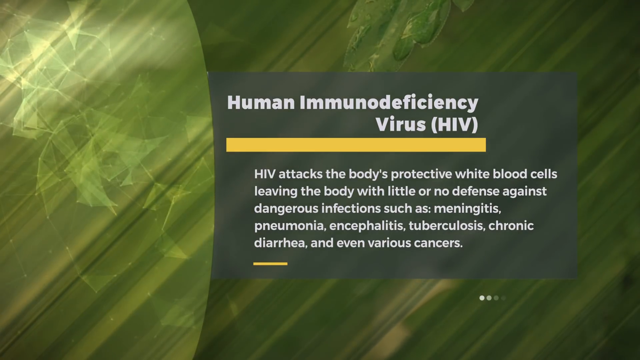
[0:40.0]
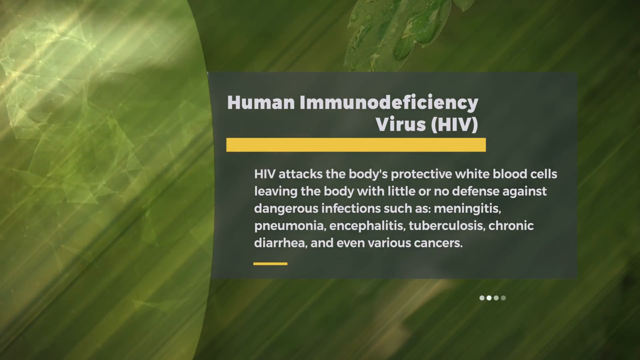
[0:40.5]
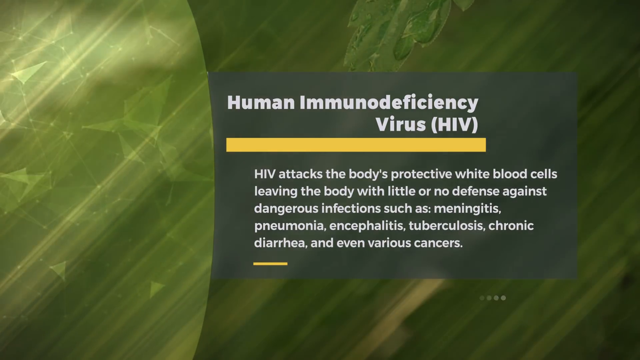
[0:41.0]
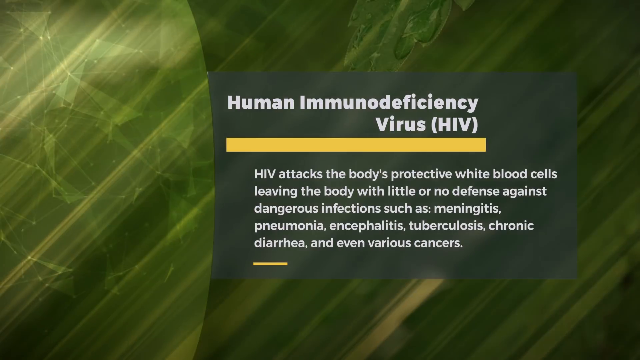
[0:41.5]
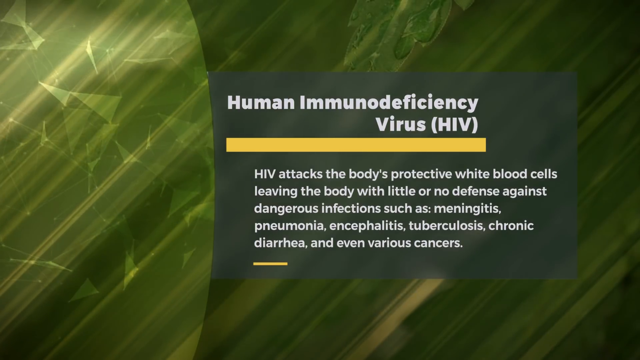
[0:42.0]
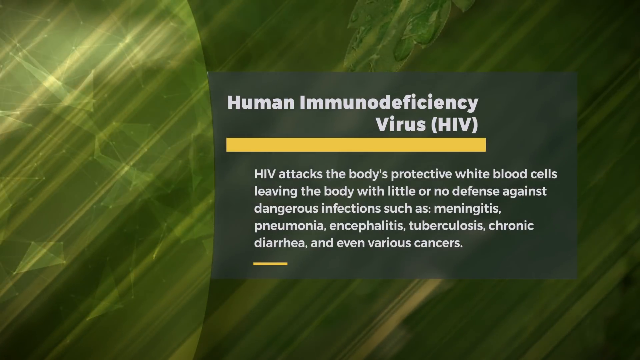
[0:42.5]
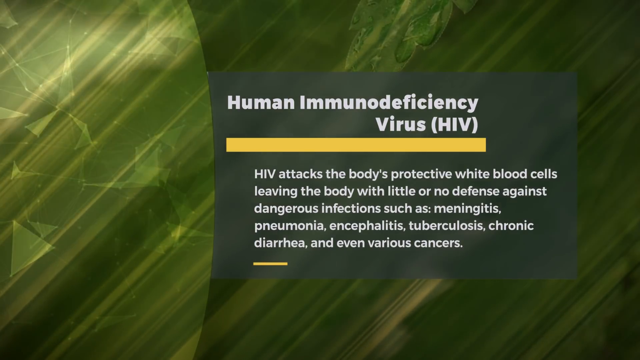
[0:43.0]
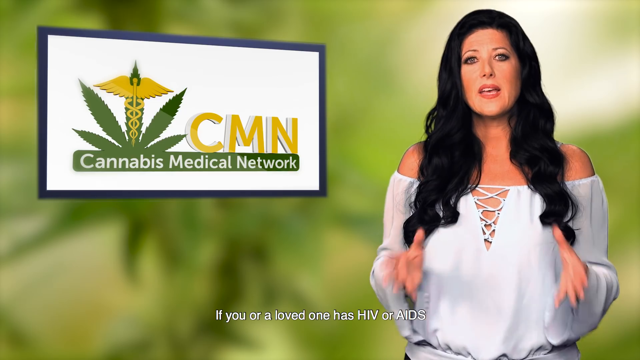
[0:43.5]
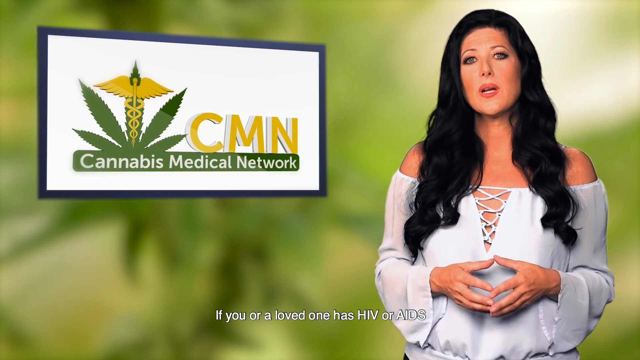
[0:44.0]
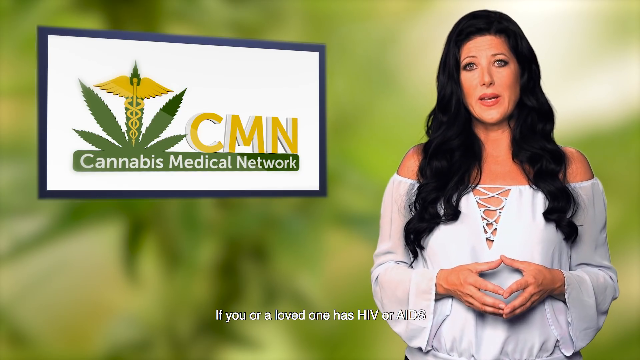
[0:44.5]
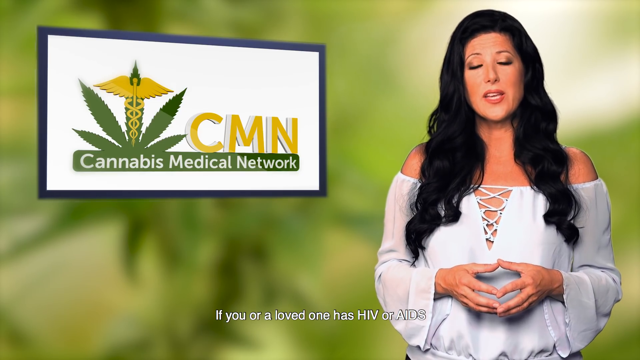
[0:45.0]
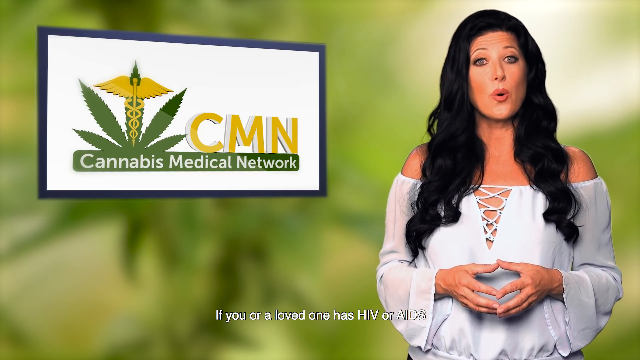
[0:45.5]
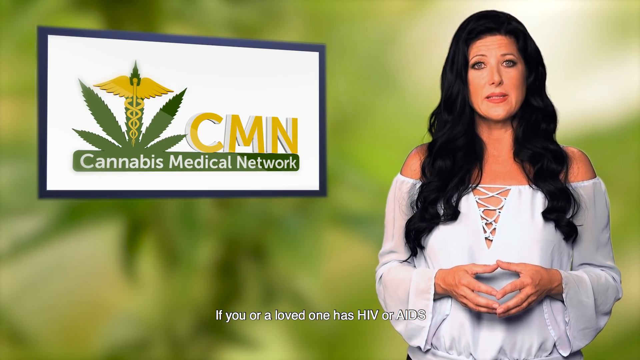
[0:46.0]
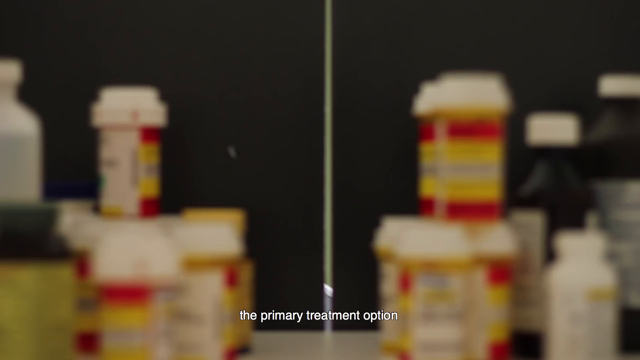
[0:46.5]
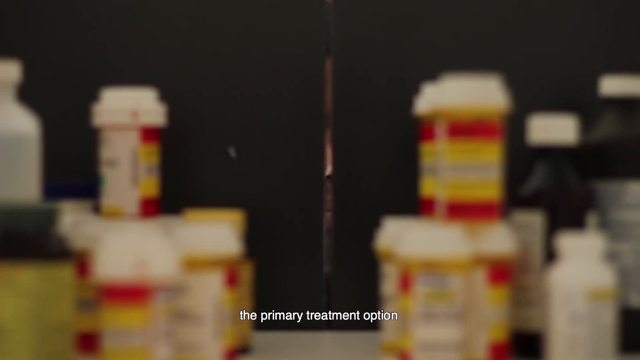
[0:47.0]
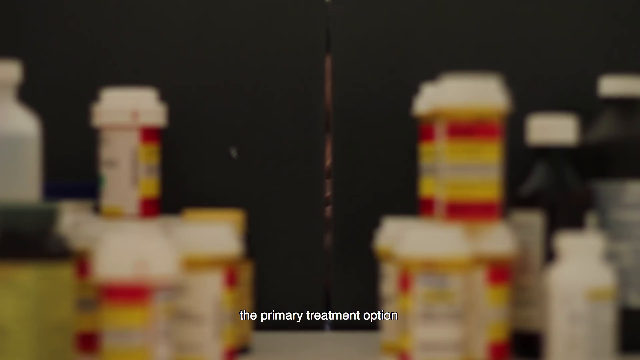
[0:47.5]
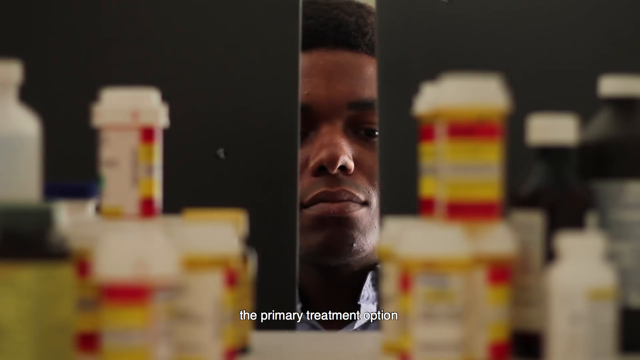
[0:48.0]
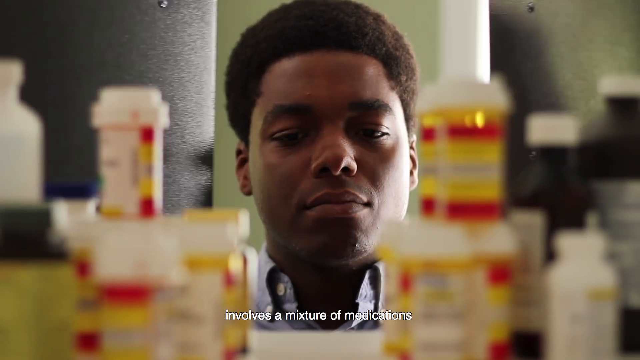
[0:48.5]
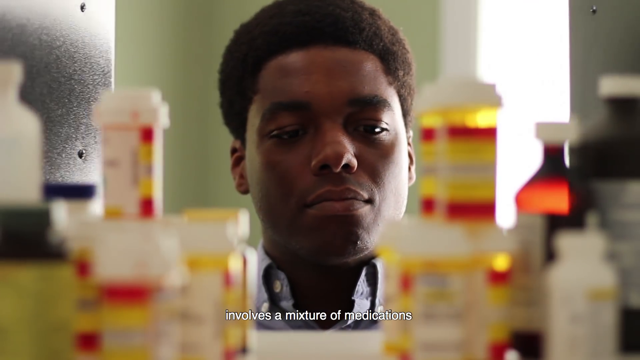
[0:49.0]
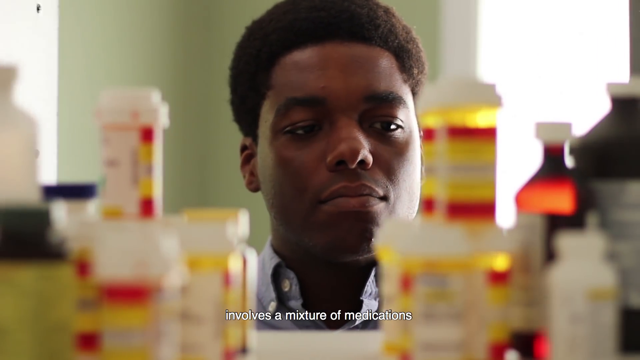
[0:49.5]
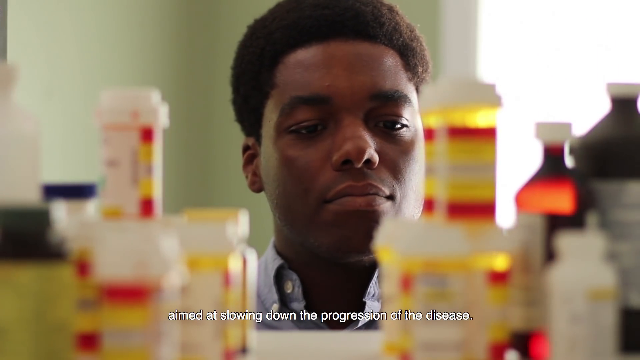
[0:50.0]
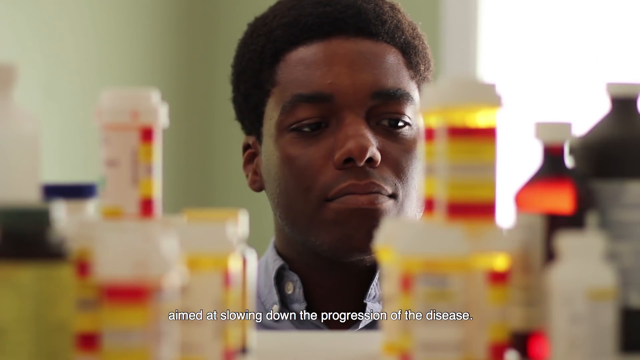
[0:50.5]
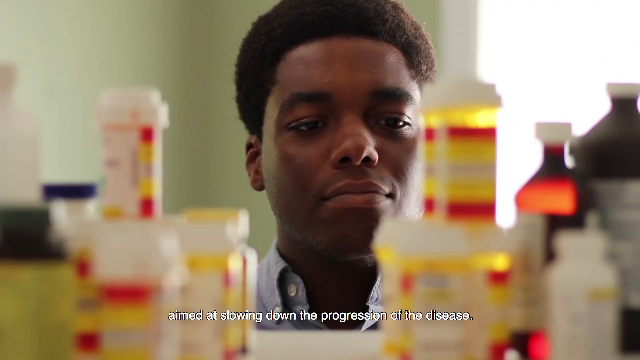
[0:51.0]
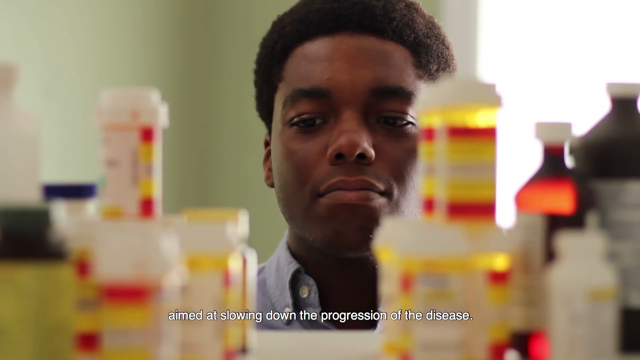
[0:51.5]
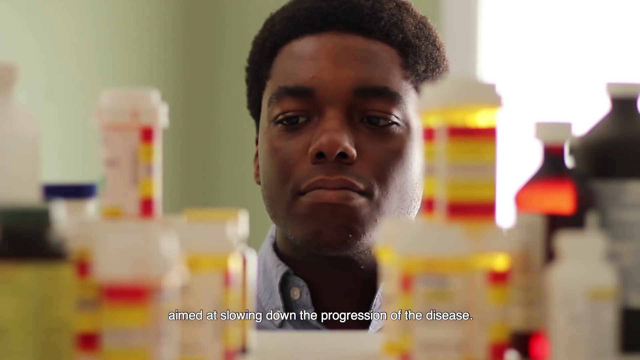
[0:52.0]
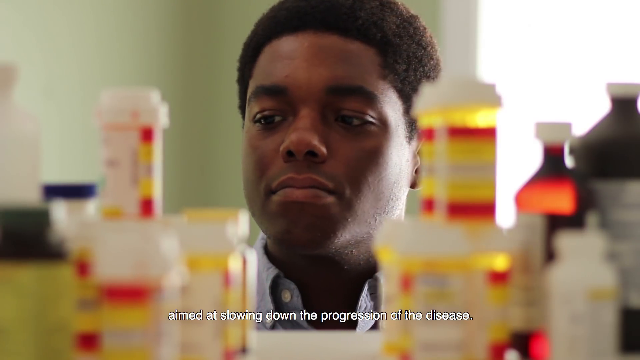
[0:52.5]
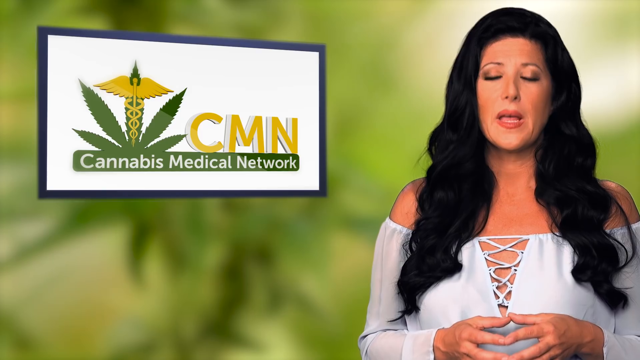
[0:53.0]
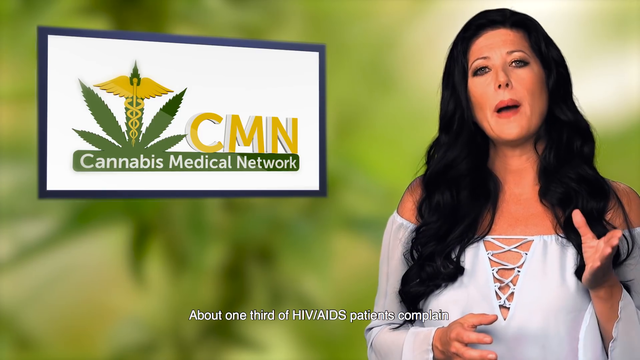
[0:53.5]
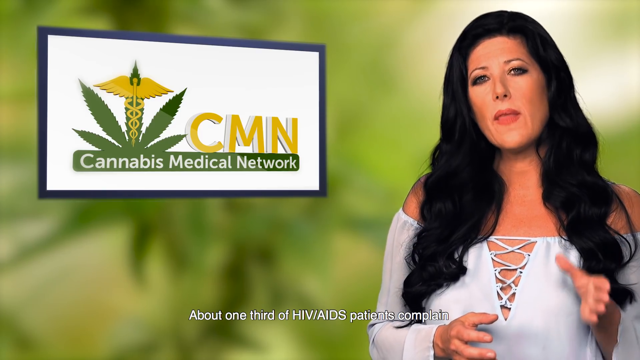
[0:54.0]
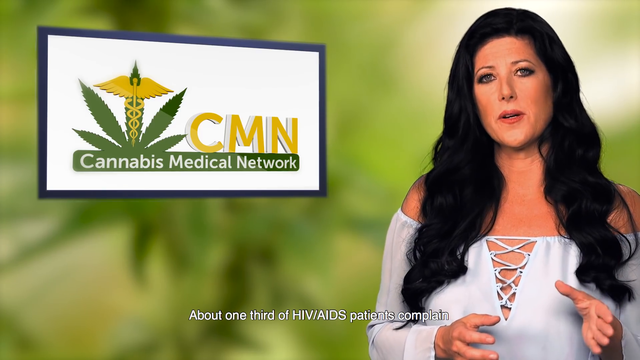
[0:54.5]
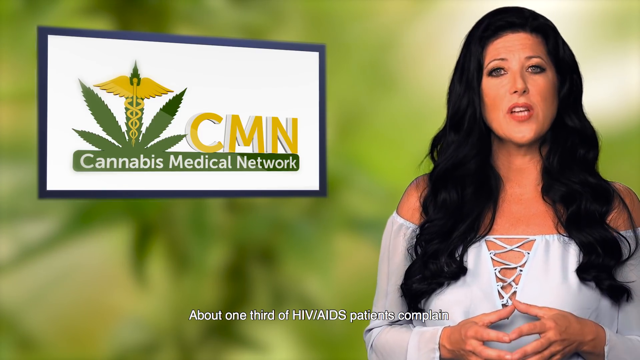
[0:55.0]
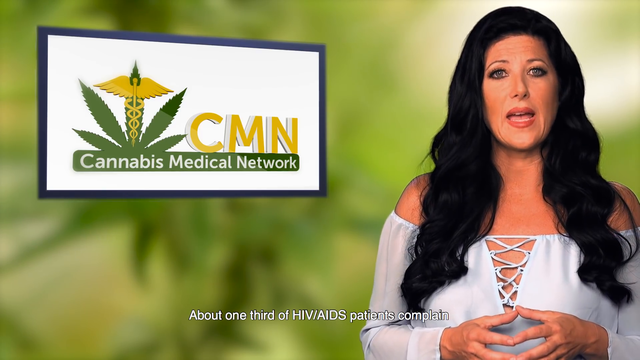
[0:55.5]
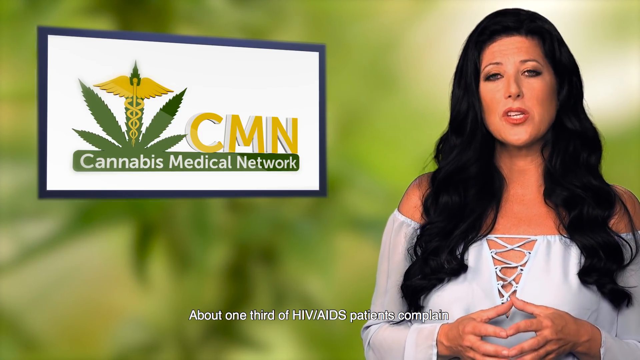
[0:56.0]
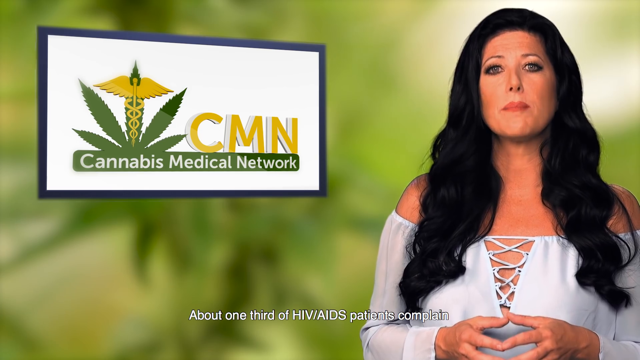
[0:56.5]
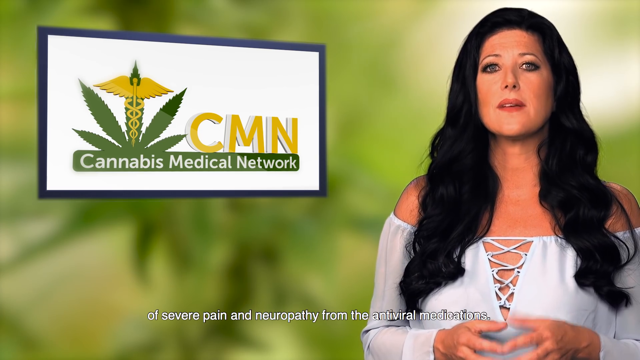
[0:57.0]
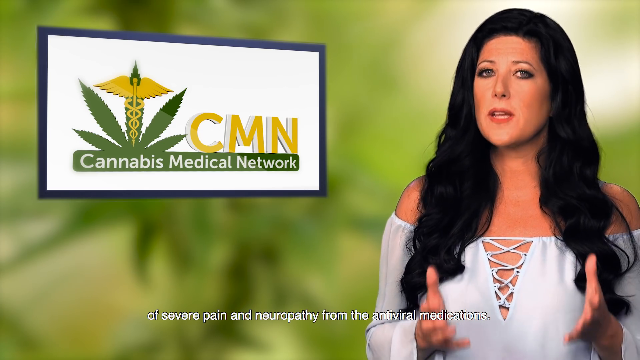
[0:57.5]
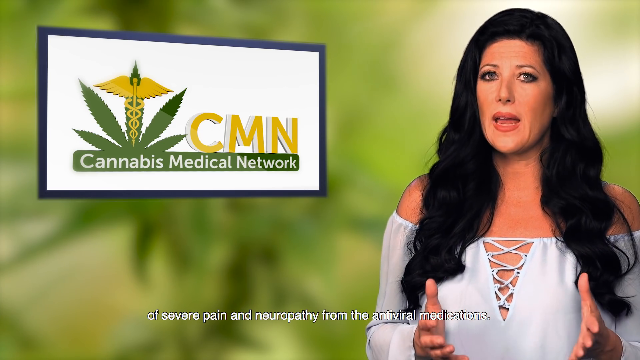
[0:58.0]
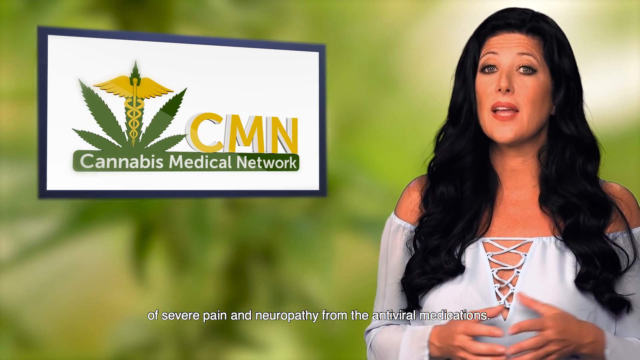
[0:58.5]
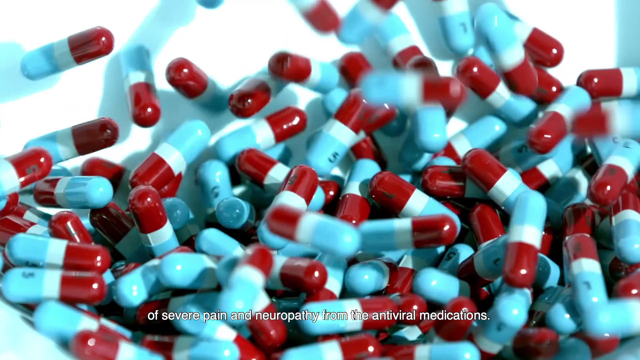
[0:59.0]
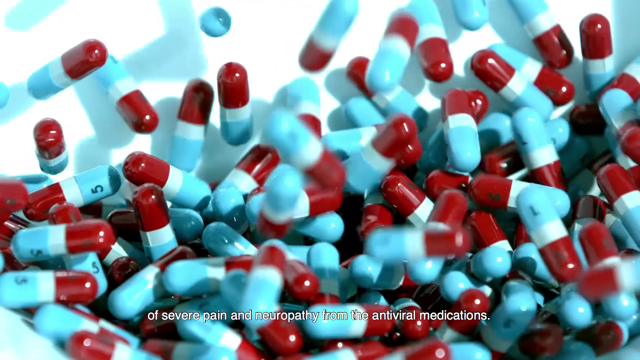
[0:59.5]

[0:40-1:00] The human immunodeficiency virus screen is still showing. The woman says, "If your loved one has HIV or AIDS, the primary treatment option involves a mixture of medication." A short clip follows of a black man with a short Afro who looks to be opening a medicine cabinet filled with a lot of medication; as the woman says "aimed at slowing down the progression of the disease," he is kind of looking at all the medicines. The video goes back to the woman, who says that about 1/3rd of HIV/AIDS patients complain of severe pain in neuropathy from the antiviral medications. On the next screen, a bunch of red and blue pills are kind of falling, cascading down on top of each other.